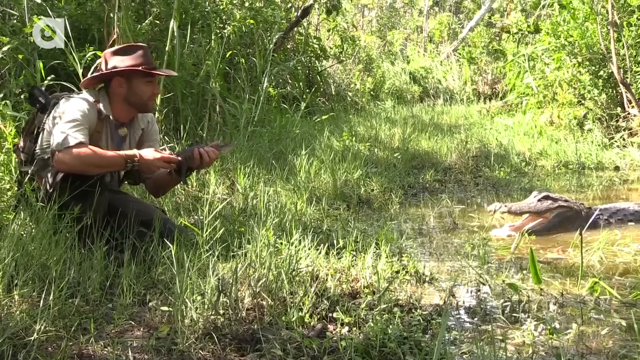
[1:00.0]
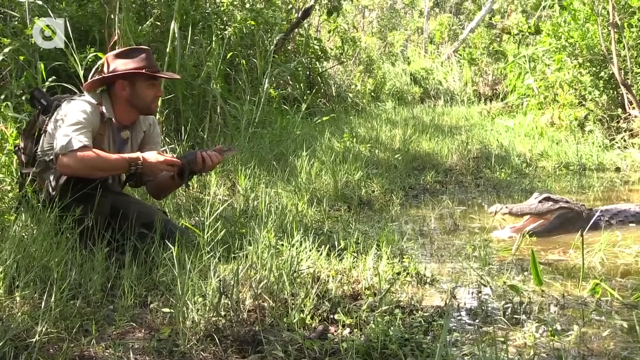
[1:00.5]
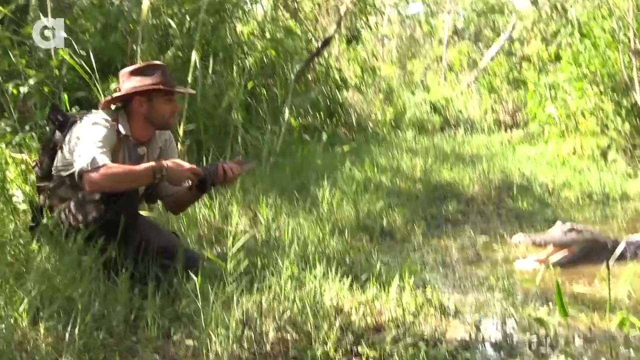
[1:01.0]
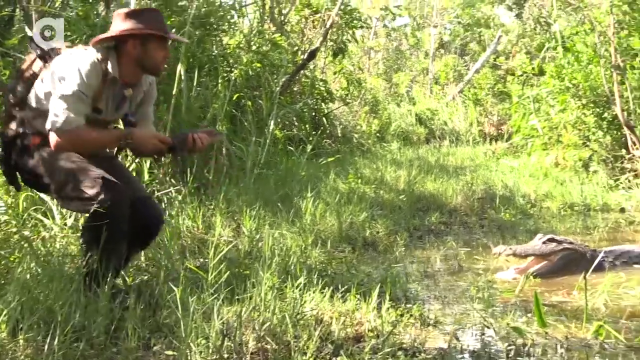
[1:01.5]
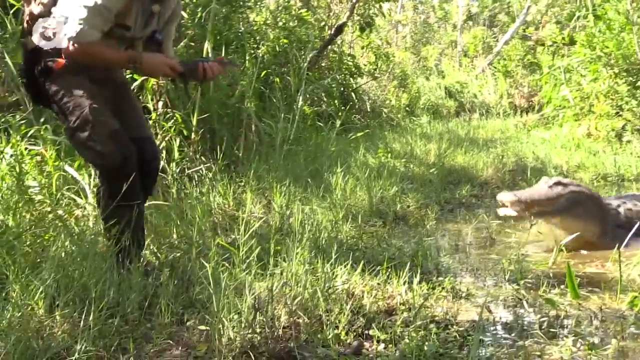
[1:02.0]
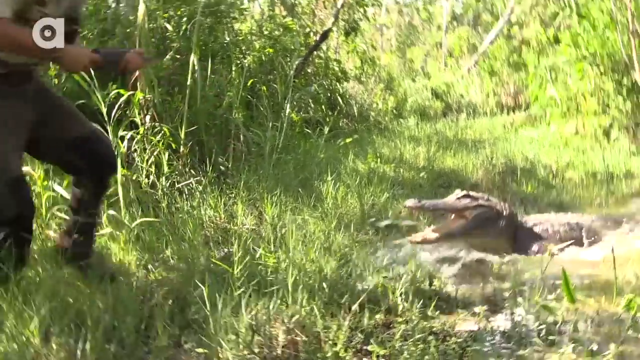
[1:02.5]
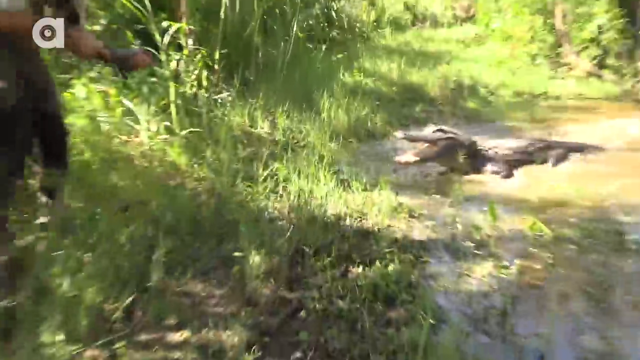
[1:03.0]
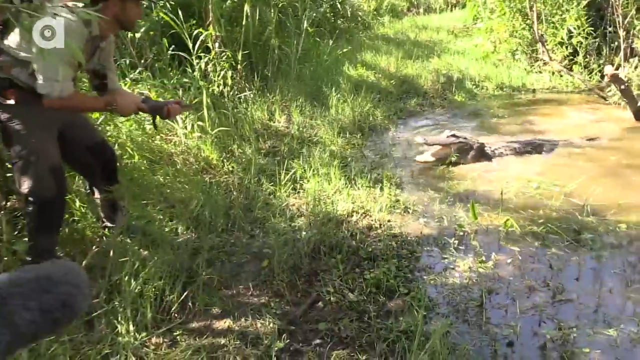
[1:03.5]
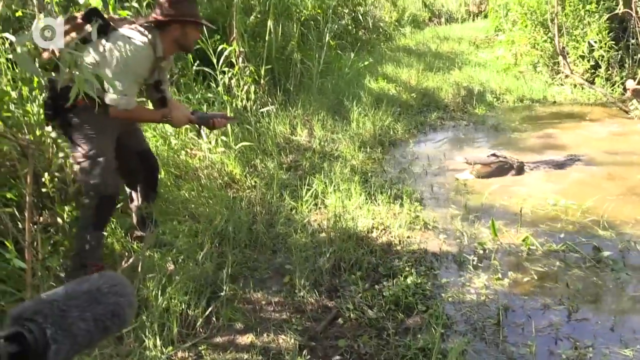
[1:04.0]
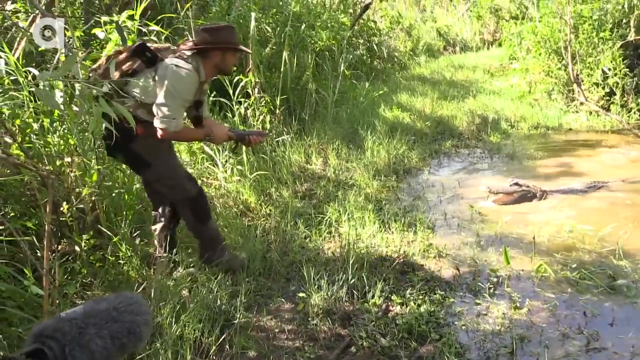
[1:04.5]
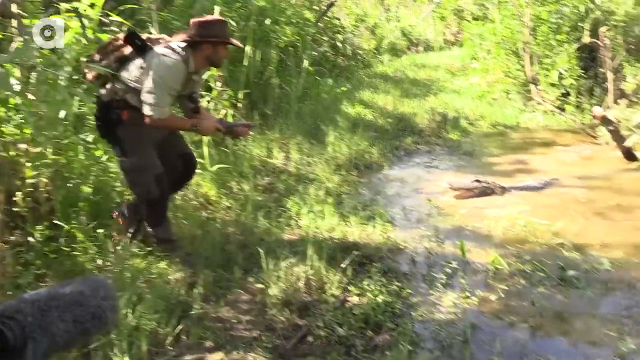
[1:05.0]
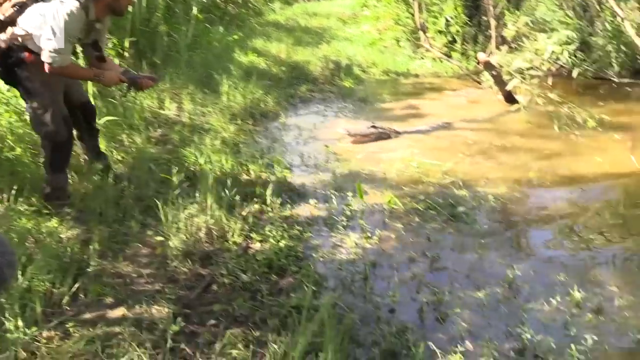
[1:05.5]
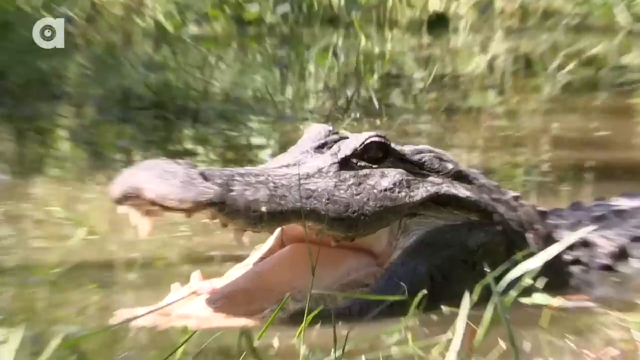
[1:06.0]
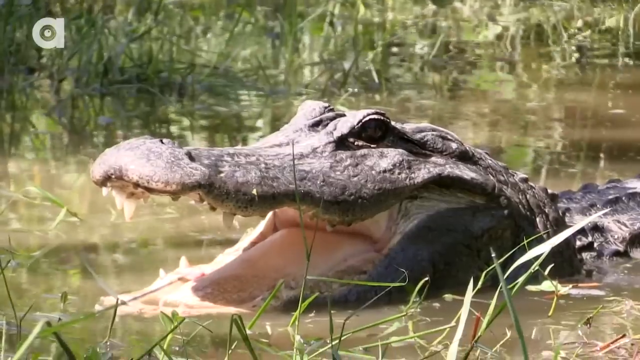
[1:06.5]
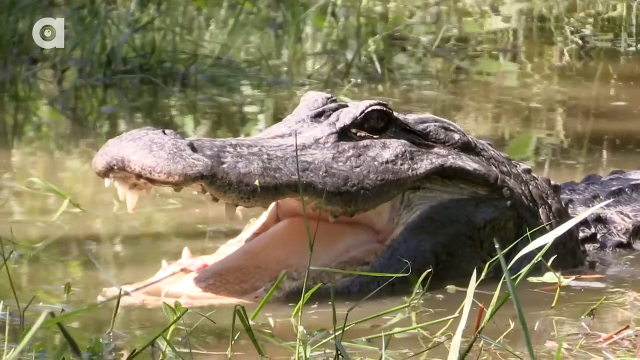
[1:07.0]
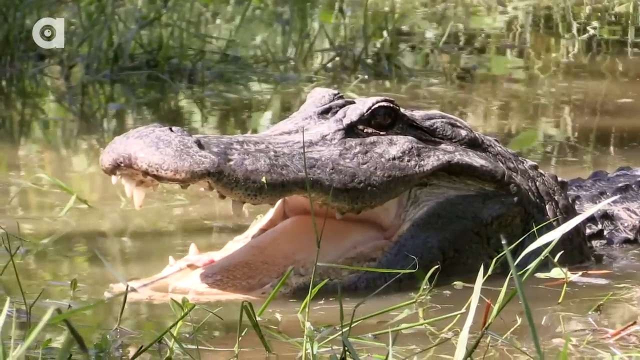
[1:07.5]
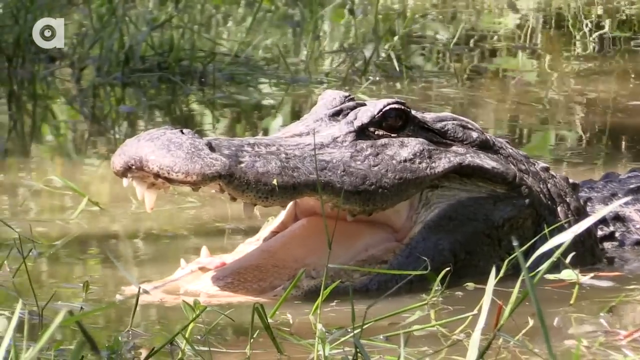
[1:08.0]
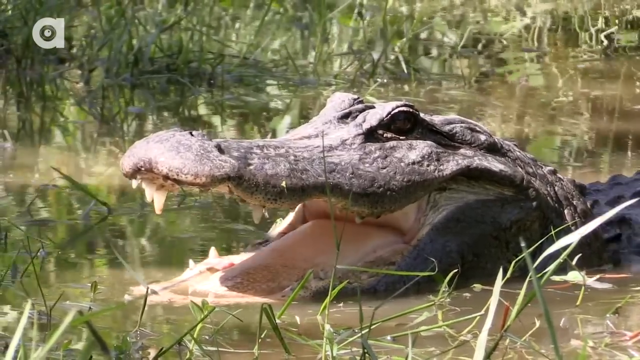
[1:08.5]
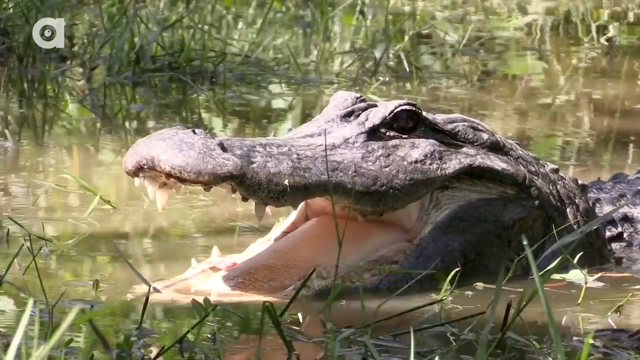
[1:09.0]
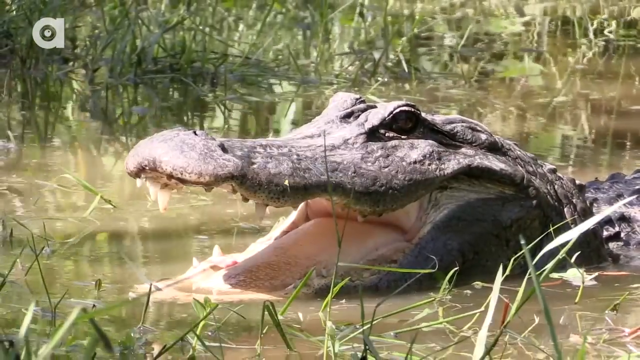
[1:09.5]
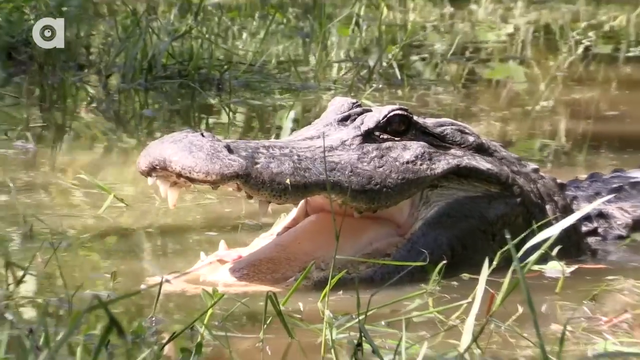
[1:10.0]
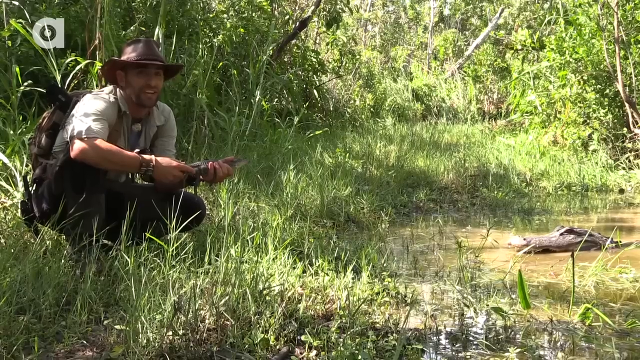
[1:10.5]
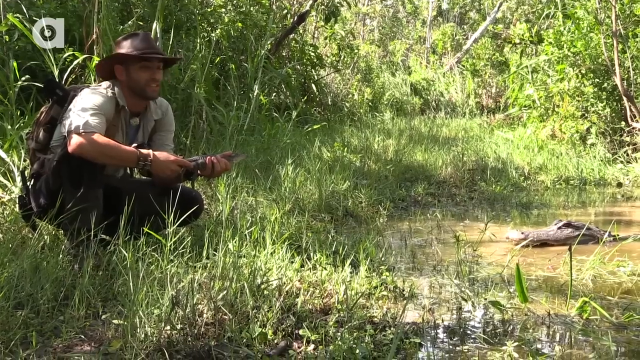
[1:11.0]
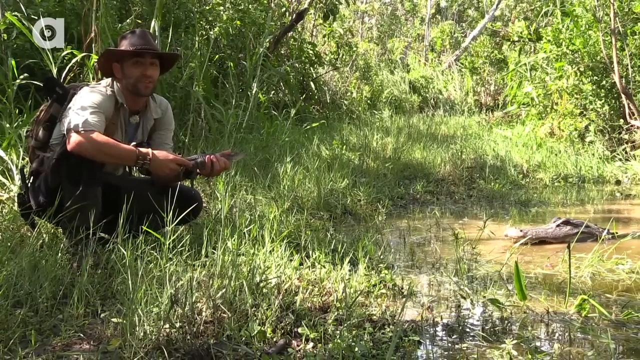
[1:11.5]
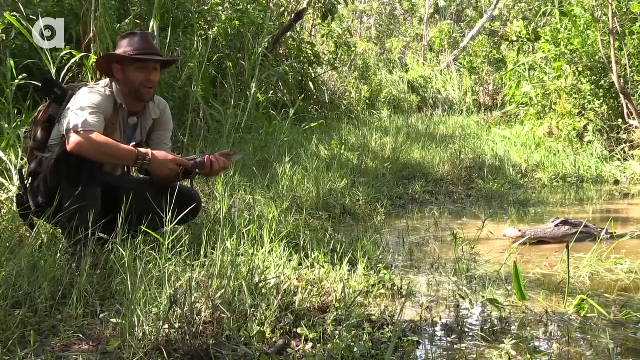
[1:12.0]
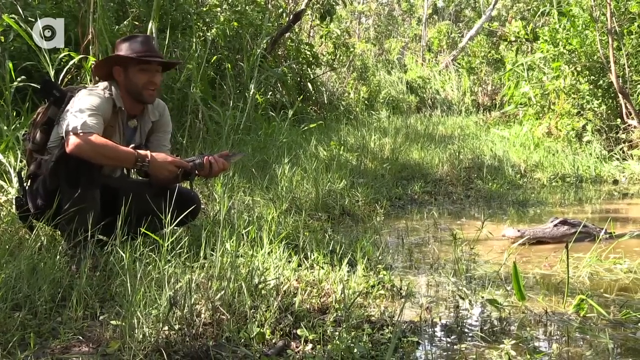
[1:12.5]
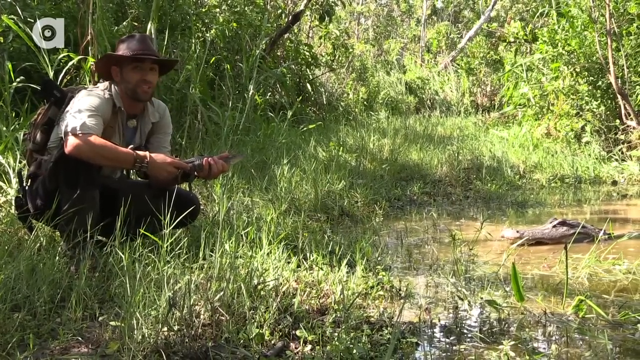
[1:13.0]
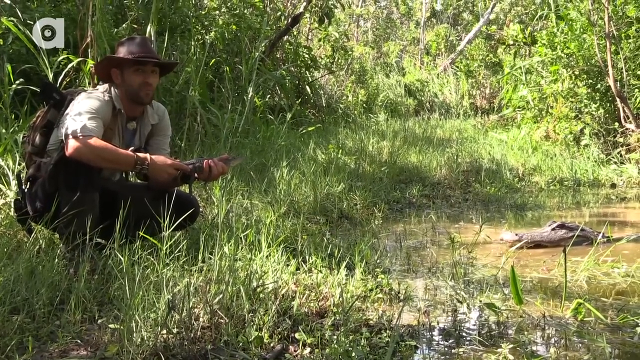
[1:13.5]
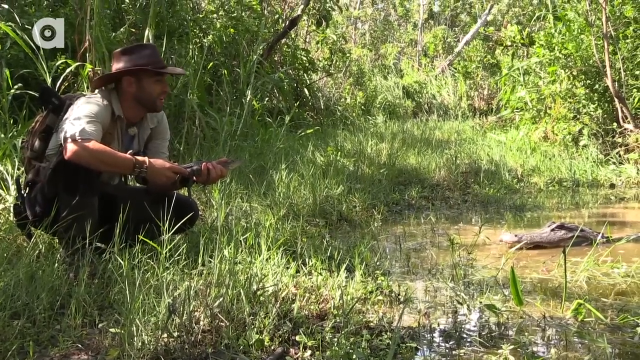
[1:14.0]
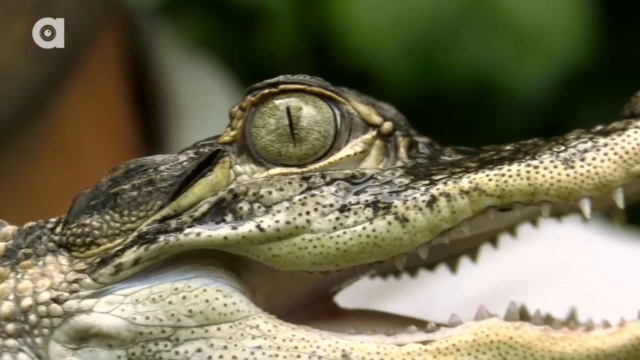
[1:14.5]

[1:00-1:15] The same man is on the left, the same mother alligator on the right, and the same baby alligator in the man's left hand. The man starts to stand up as the mother alligator approaches. When he is almost fully upright, the mother alligator lunges toward him. The man backs up, and the mother alligator slides a little way down into the water, keeping her mouth open and still looking very threatening. A close-up shows her with the bright sunlight on her very sharp, pointy teeth and the water moving a little; she is clearly not going anywhere and seems there to get her baby back.